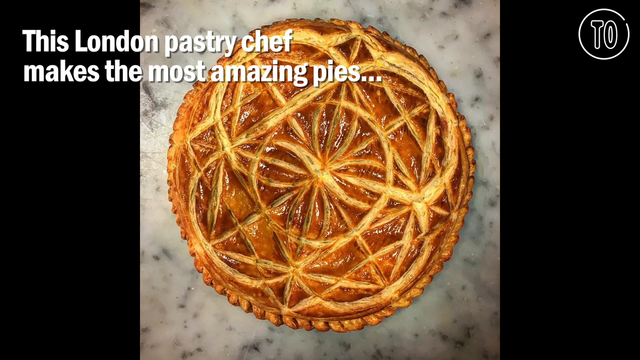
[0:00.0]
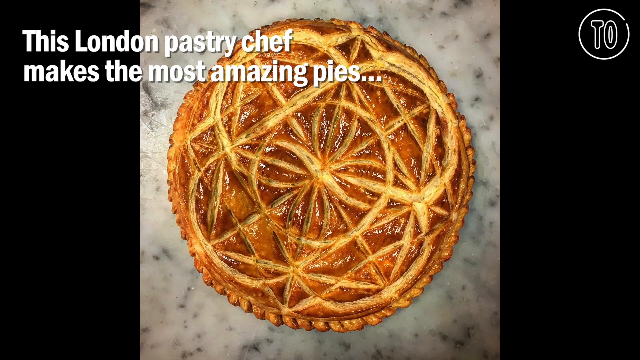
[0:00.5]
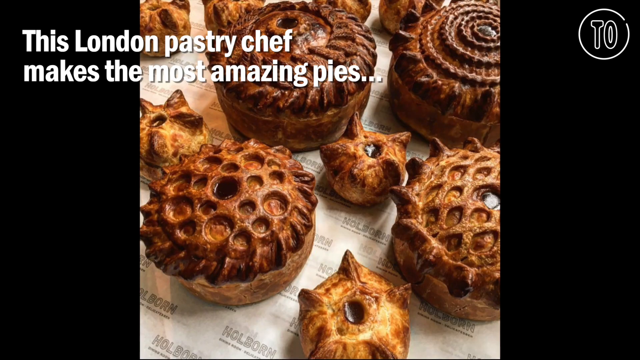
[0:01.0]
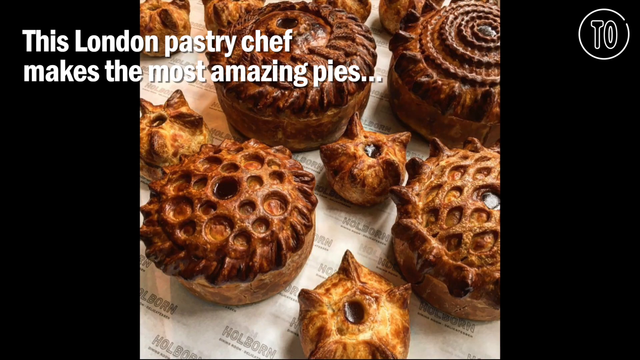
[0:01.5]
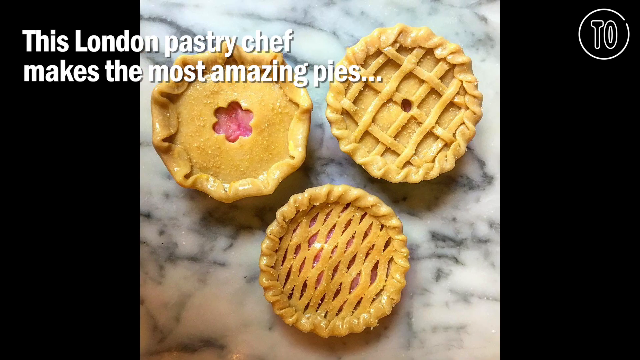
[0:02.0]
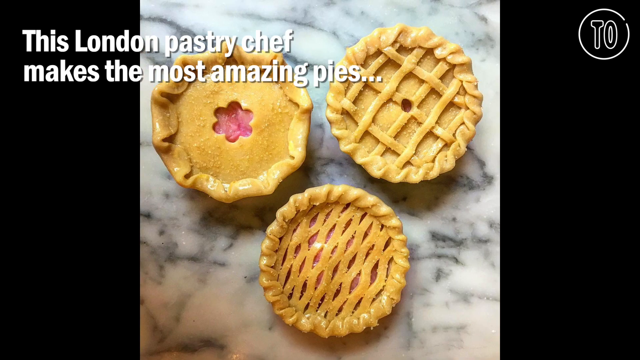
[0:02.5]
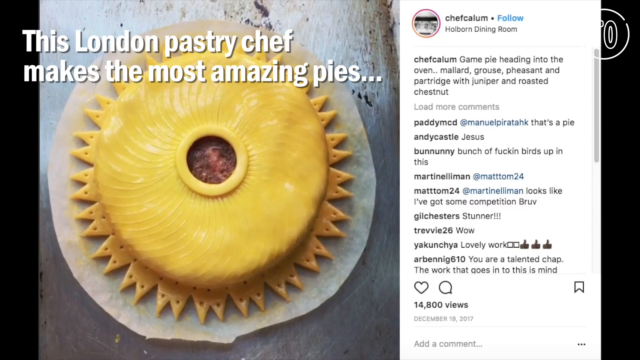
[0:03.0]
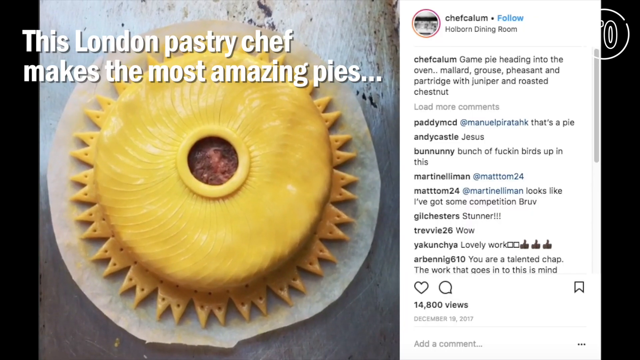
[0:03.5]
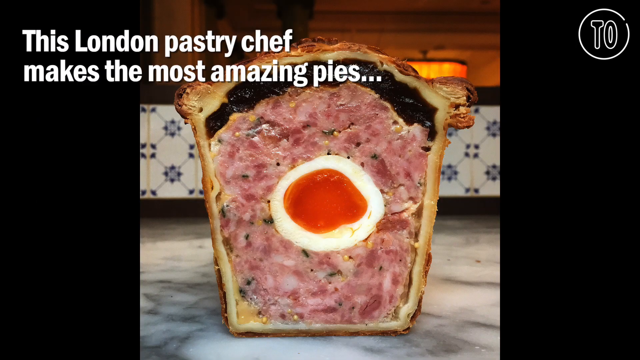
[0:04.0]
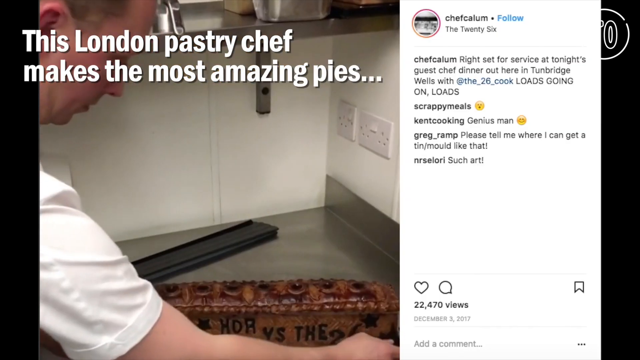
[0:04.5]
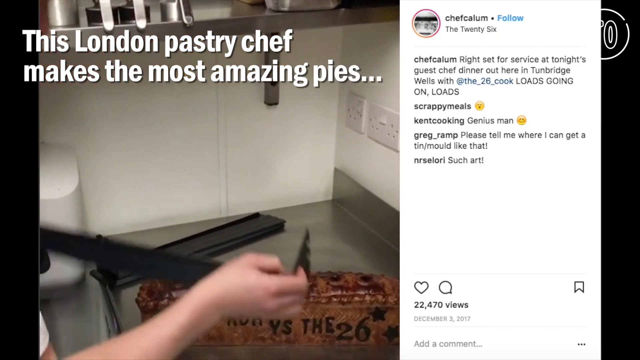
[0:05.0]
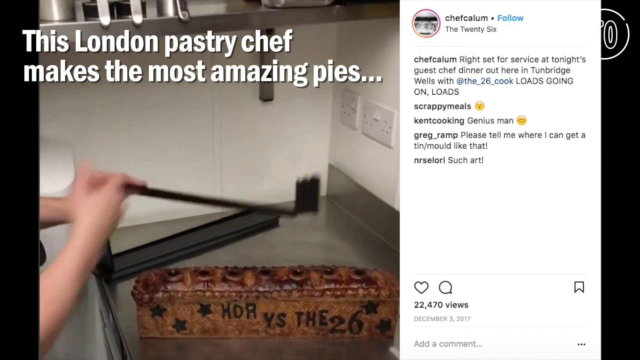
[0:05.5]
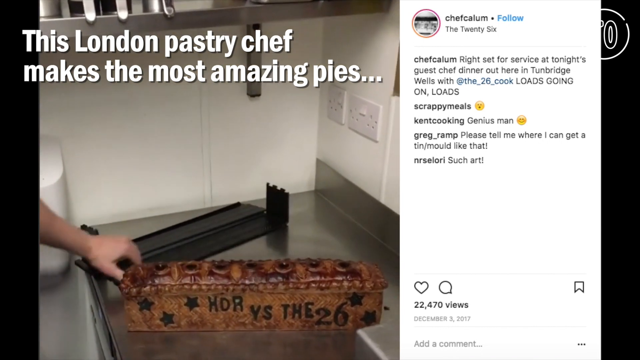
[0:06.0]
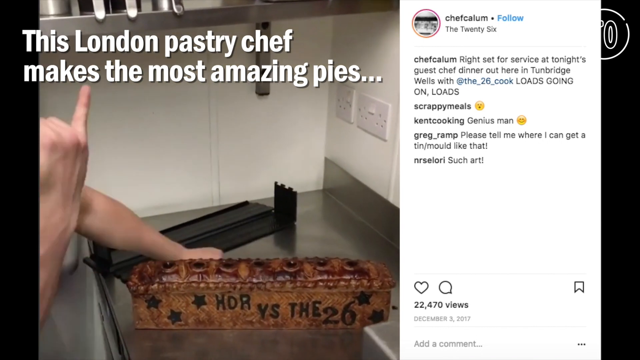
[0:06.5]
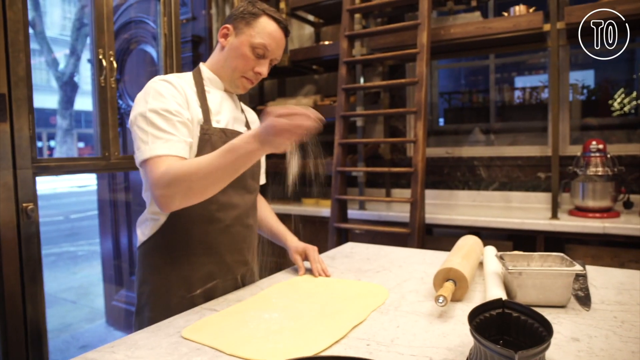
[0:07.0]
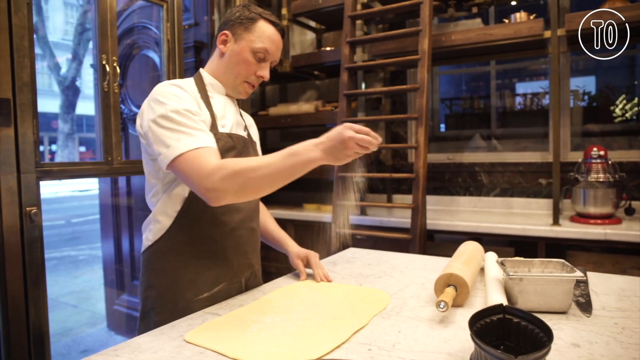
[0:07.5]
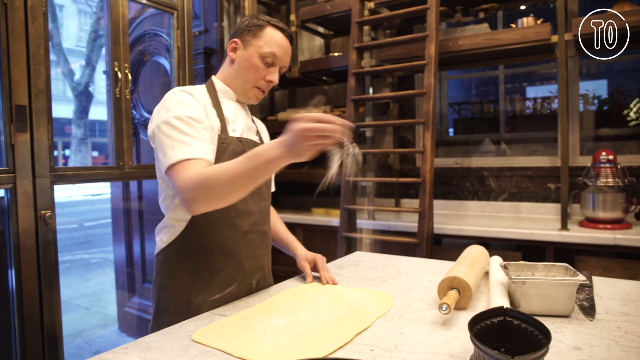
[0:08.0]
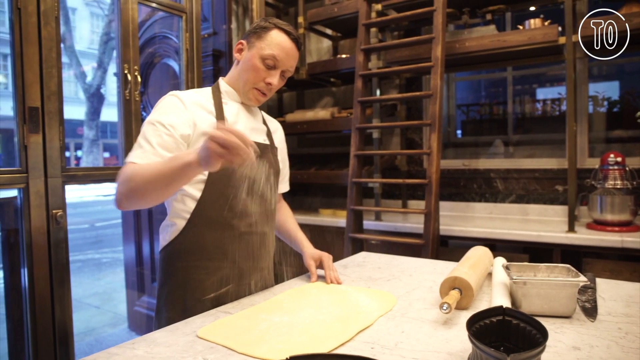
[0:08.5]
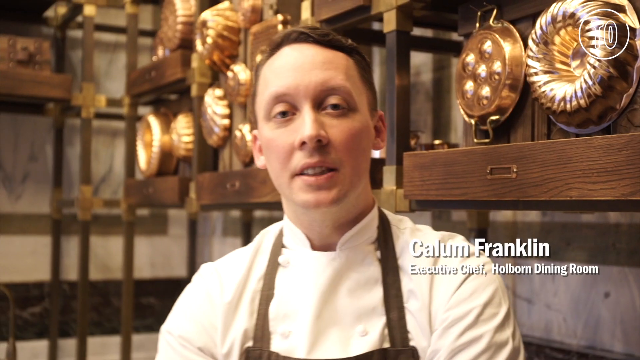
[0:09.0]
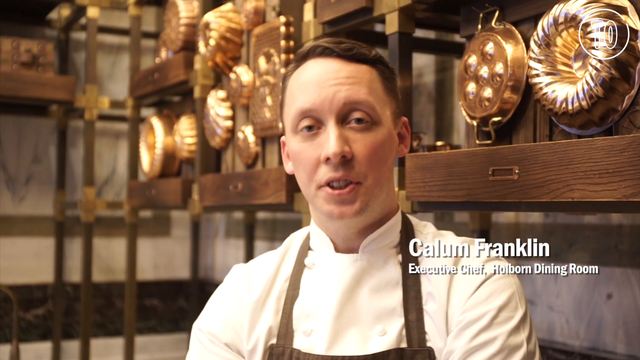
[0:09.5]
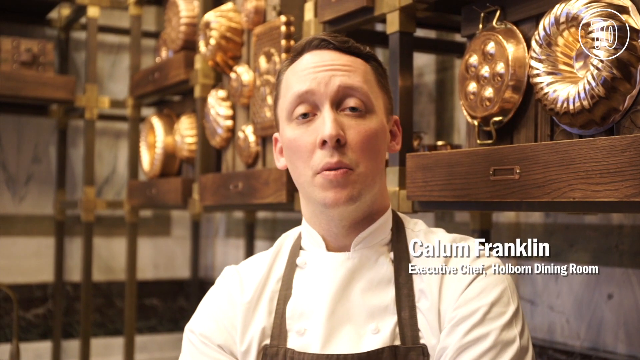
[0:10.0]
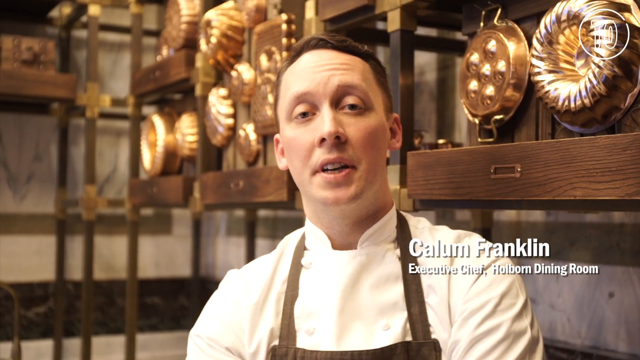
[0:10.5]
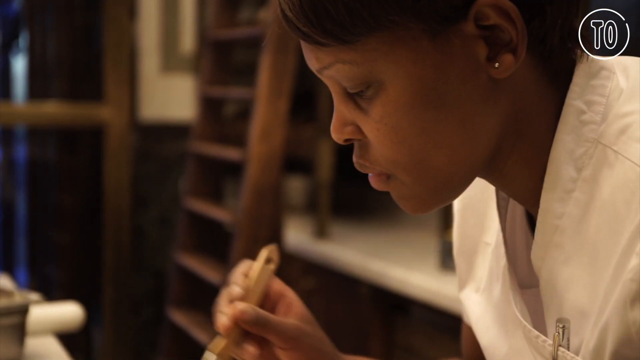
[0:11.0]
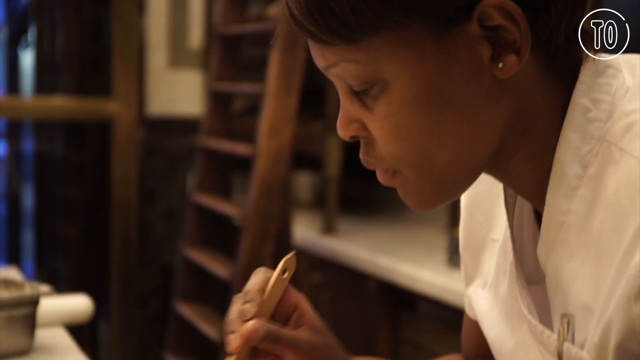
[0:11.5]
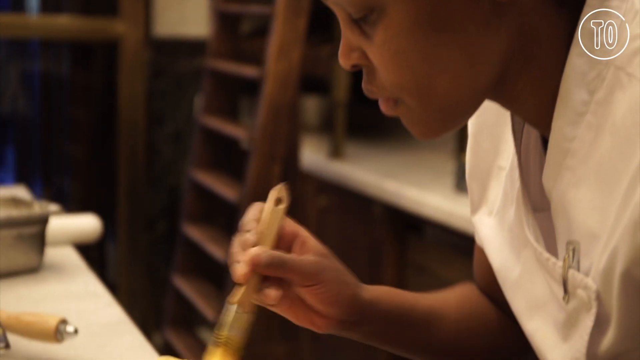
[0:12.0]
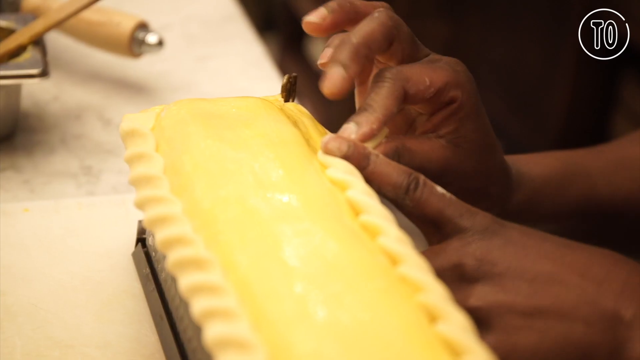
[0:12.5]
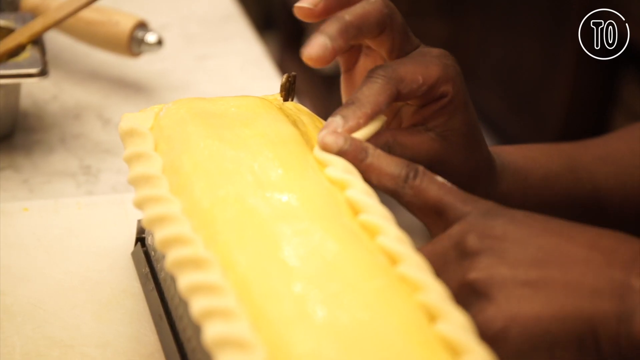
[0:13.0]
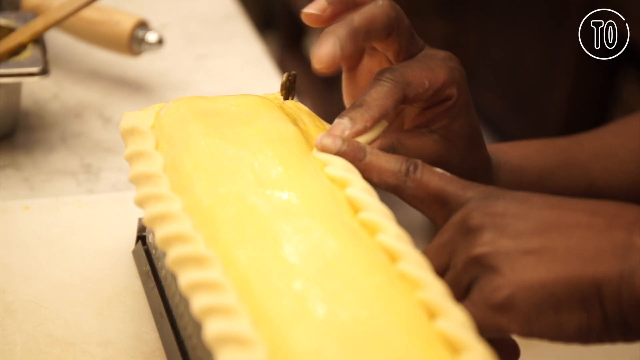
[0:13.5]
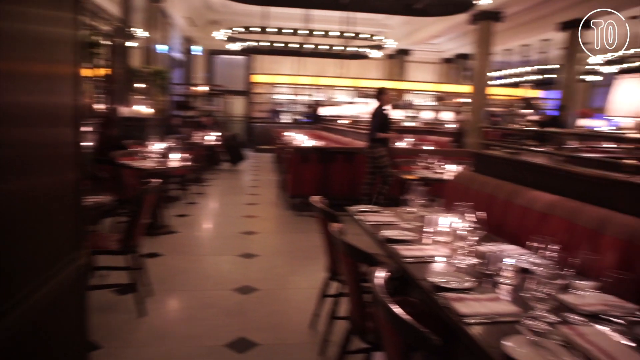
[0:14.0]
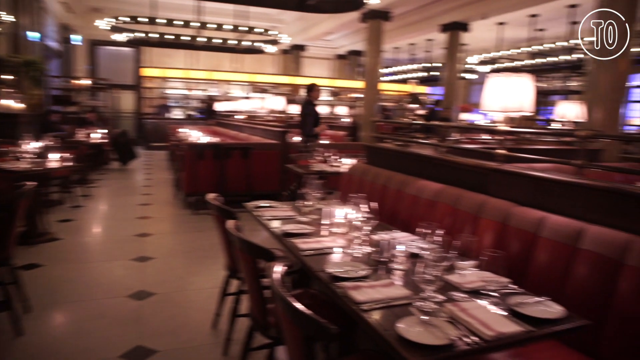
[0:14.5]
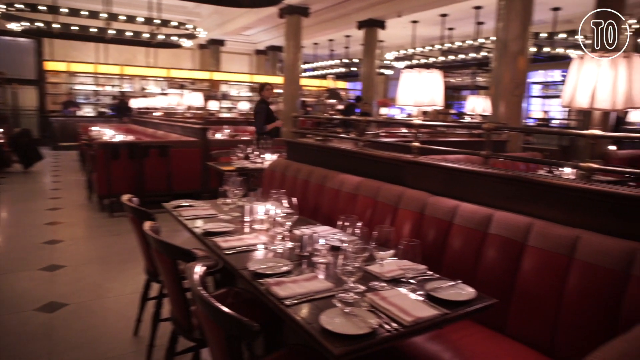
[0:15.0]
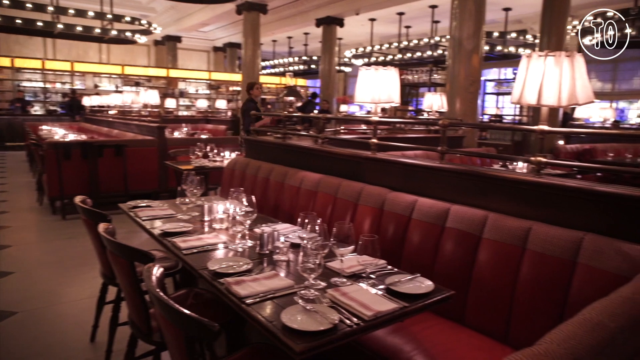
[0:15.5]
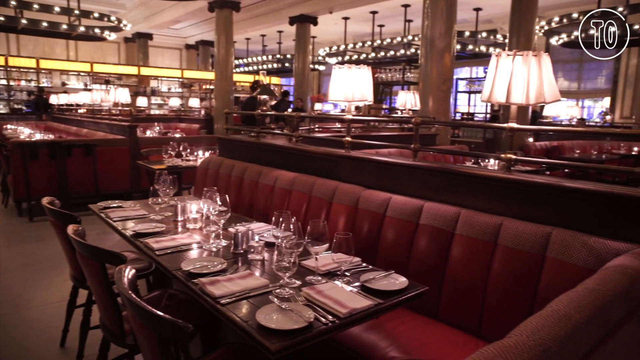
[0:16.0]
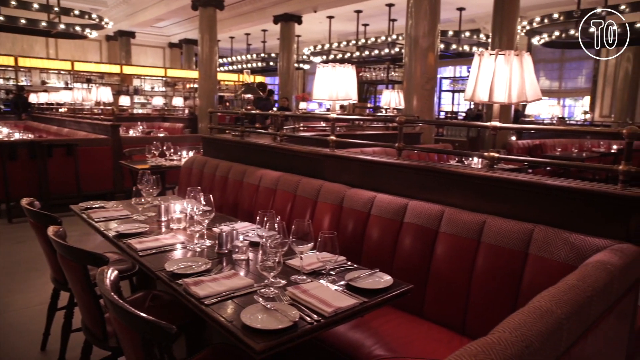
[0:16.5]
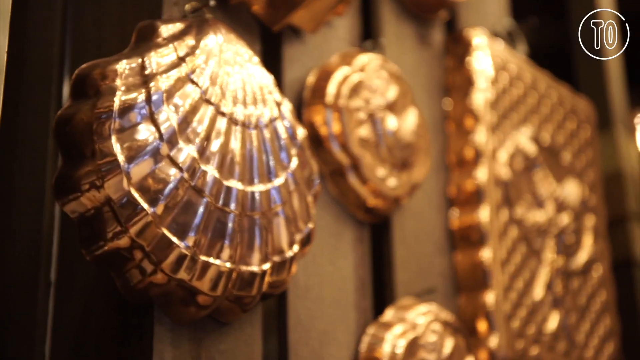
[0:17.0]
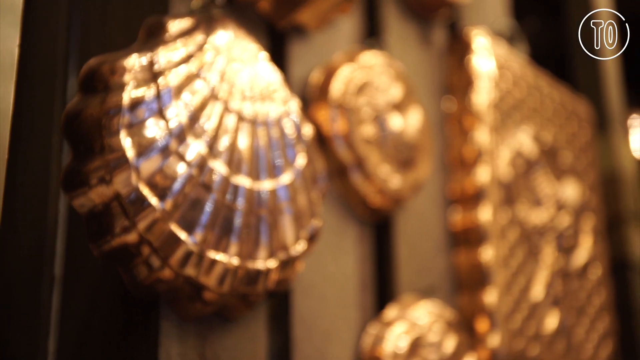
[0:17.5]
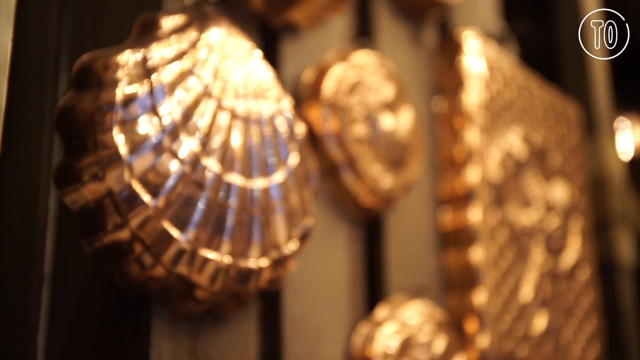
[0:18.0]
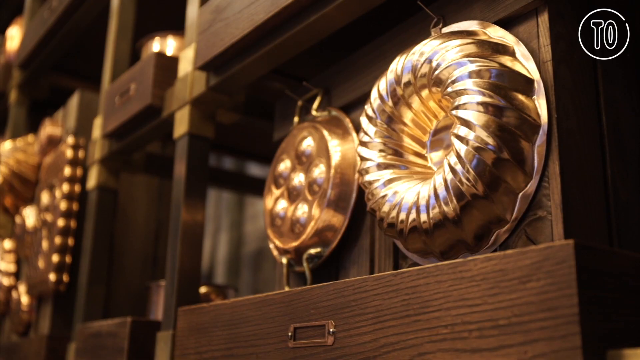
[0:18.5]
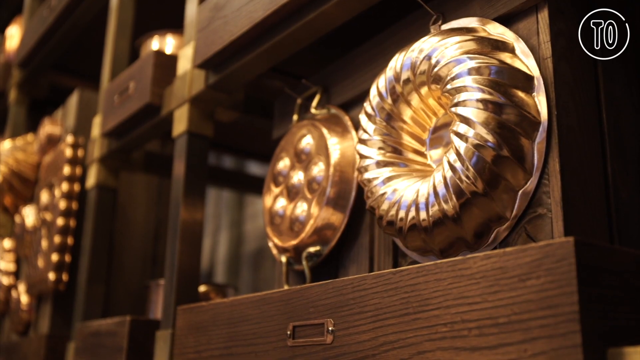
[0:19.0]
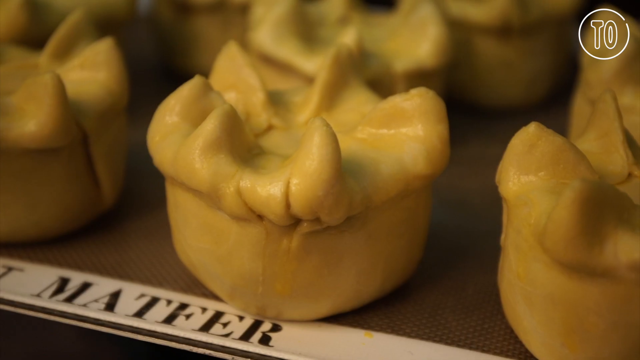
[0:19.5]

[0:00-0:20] The video opens with an overhead shot of a pie. Black borders run down the left and right sides, and only the image in the center has any color. Text in the upper left corner reads "this London pastry chef makes the most amazing pies." The top of the pie has an elegant design of swirls, sort of half moons, and very sharp lines. Shortly after, the next scene shows what look like very exotic pies and pastries, with sort of honeycomb-patterned tops and sort of snail-shaped tops, and some that appear to have just a single hole with peaks on the edges. Next come three smaller pastries of a lighter golden brown color with traditional designs typically seen on pies.